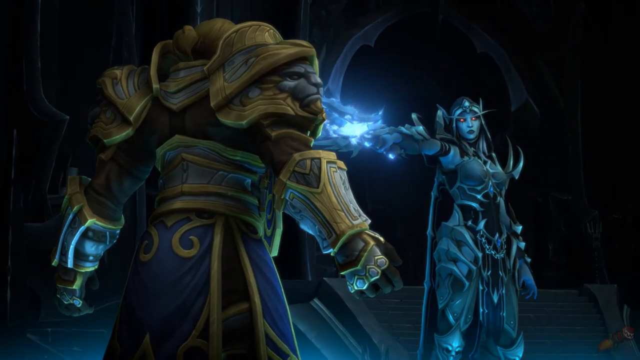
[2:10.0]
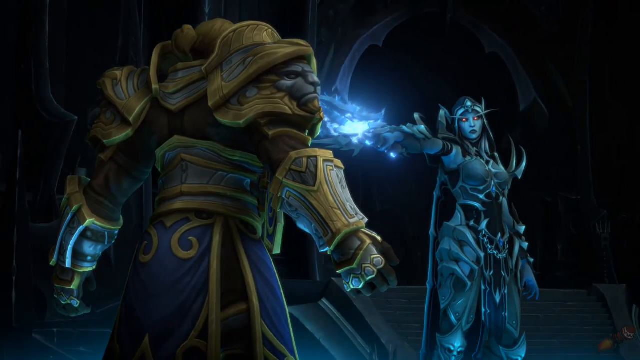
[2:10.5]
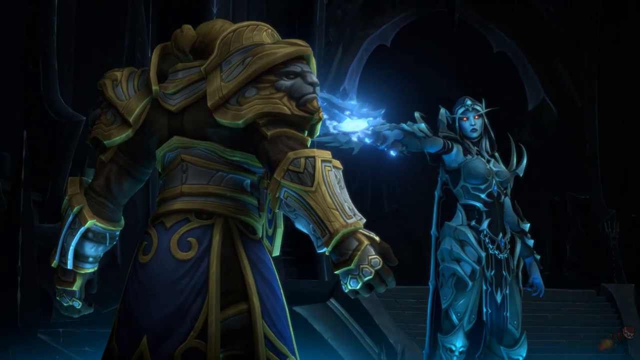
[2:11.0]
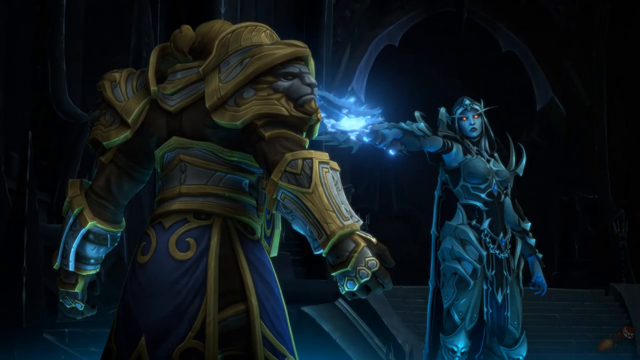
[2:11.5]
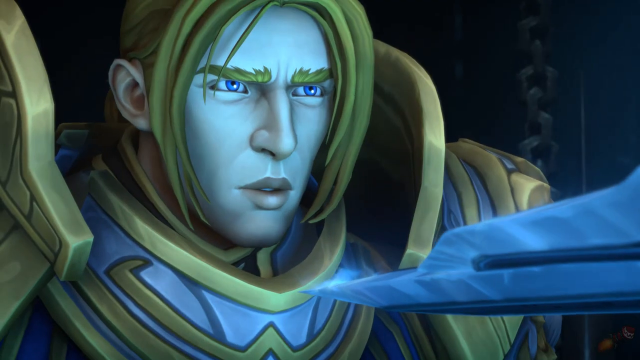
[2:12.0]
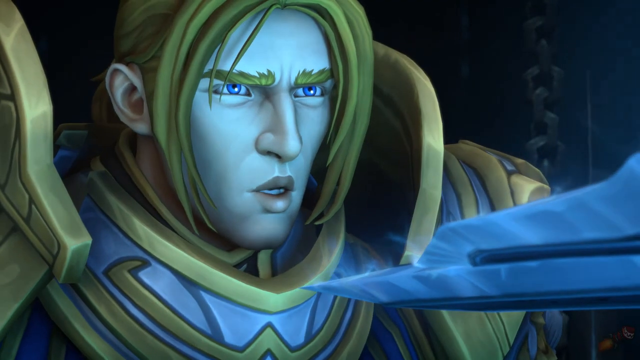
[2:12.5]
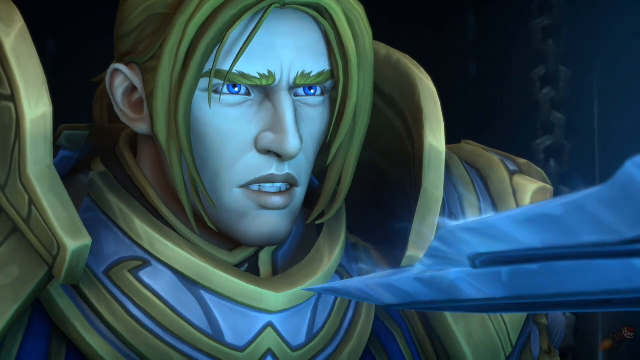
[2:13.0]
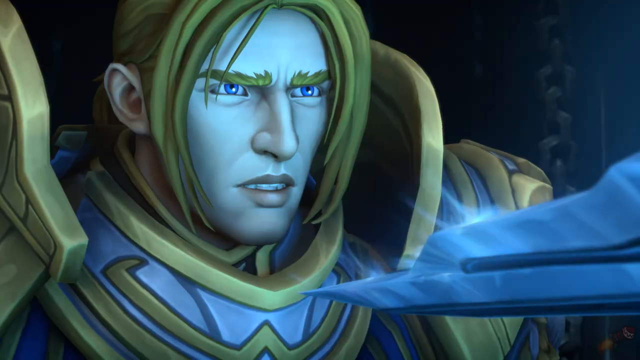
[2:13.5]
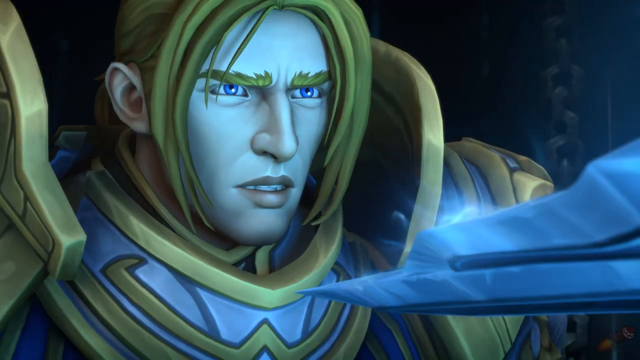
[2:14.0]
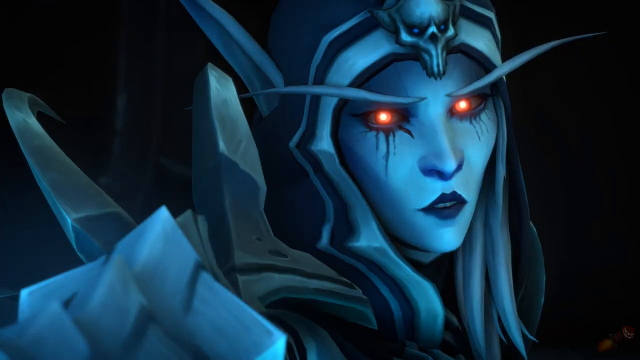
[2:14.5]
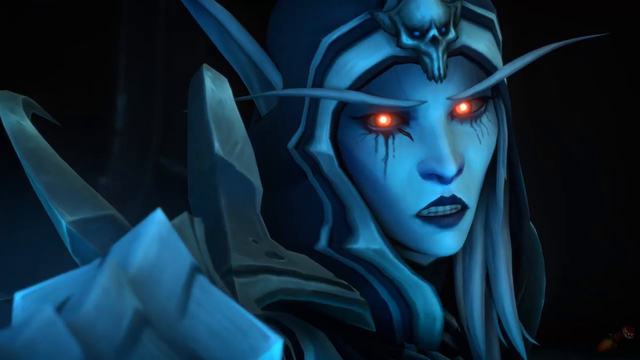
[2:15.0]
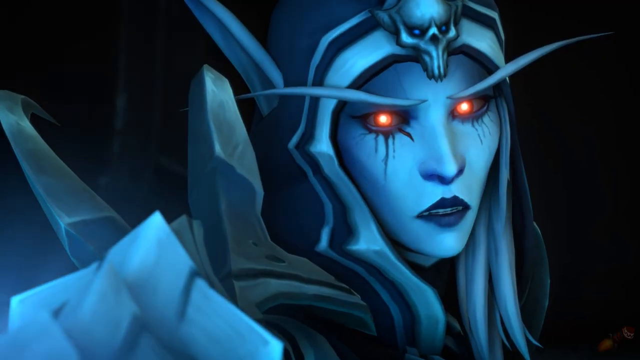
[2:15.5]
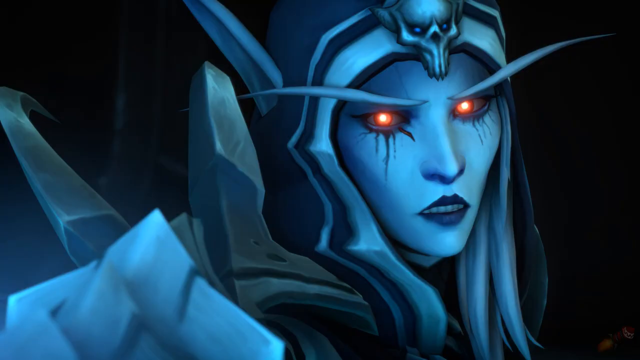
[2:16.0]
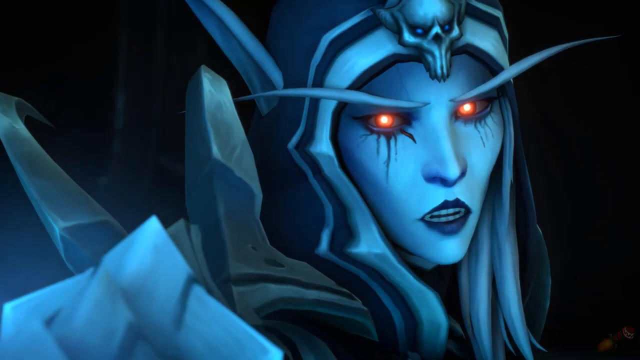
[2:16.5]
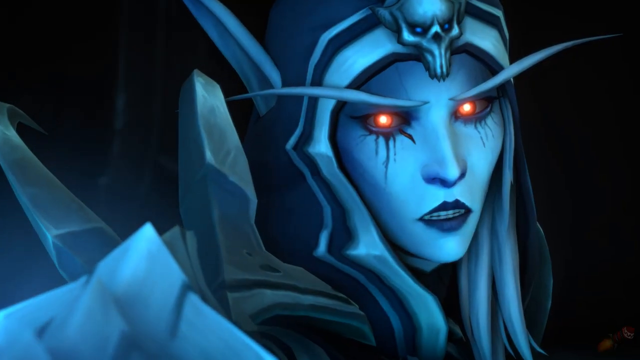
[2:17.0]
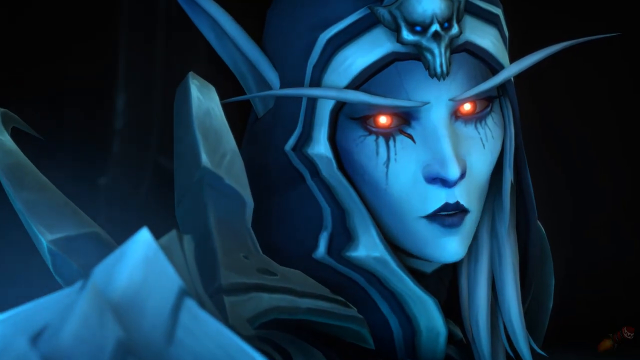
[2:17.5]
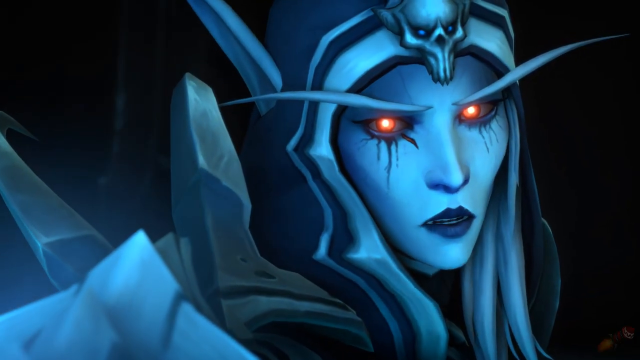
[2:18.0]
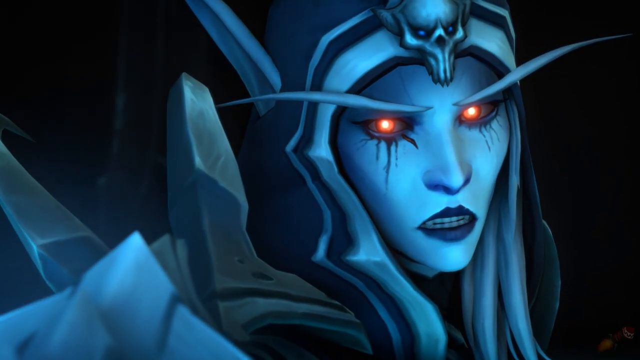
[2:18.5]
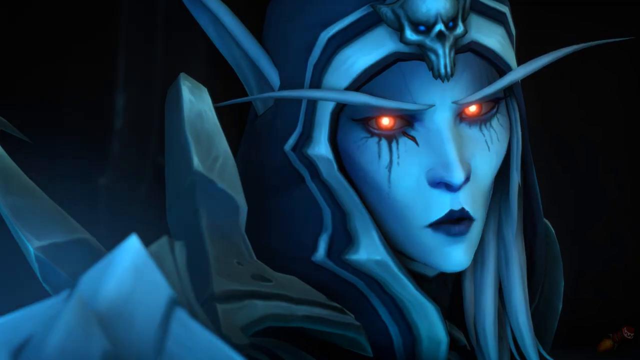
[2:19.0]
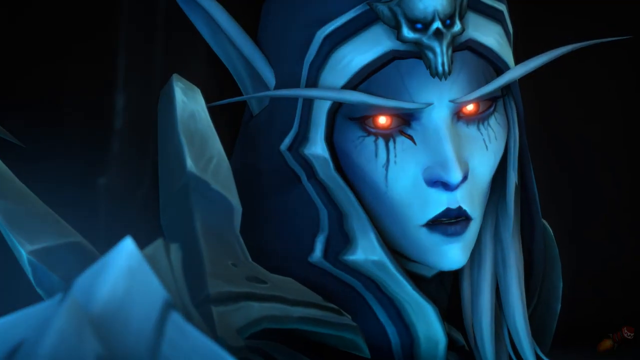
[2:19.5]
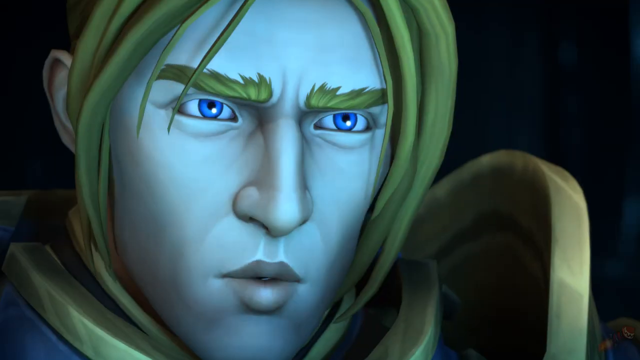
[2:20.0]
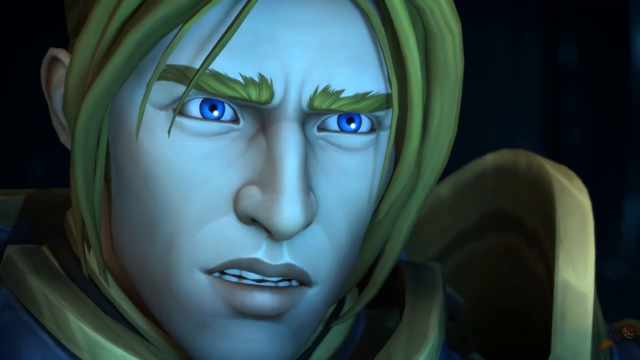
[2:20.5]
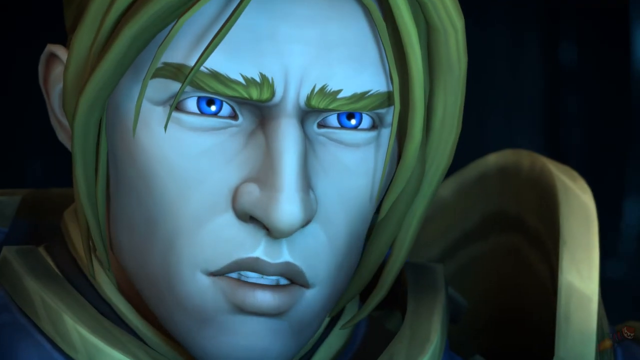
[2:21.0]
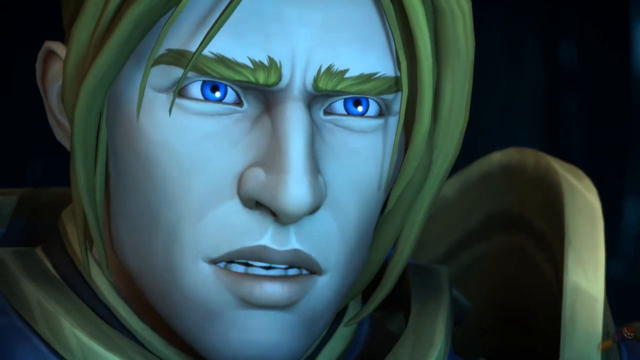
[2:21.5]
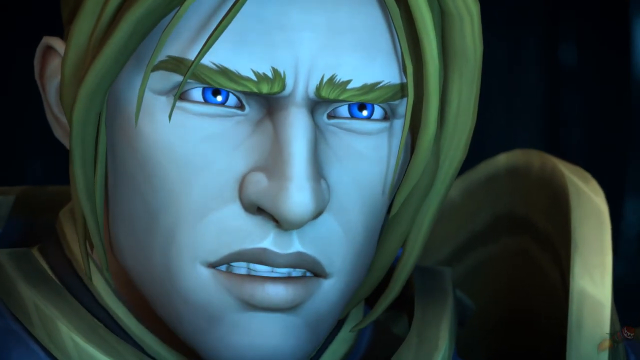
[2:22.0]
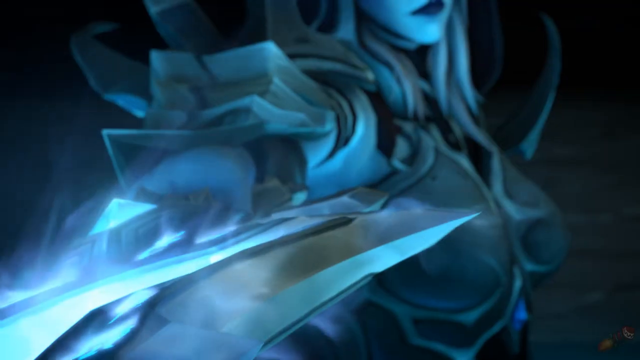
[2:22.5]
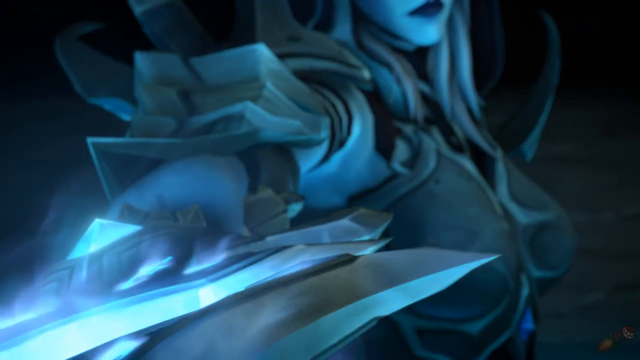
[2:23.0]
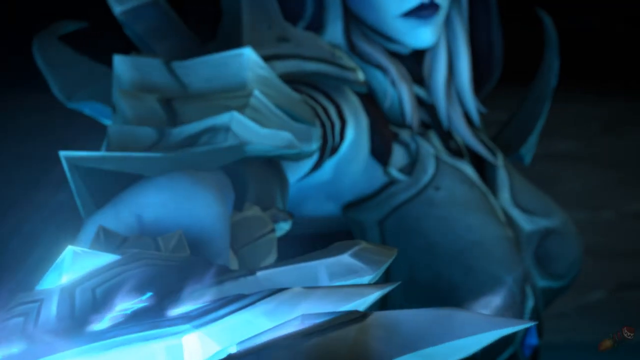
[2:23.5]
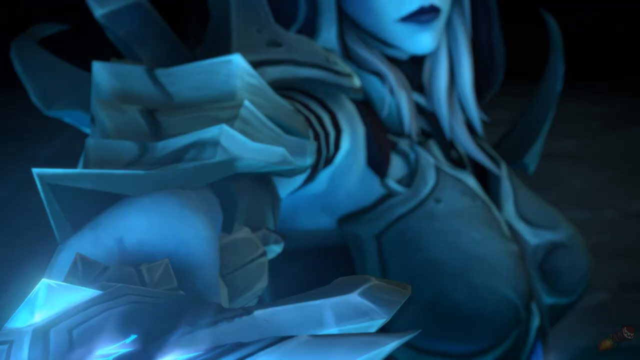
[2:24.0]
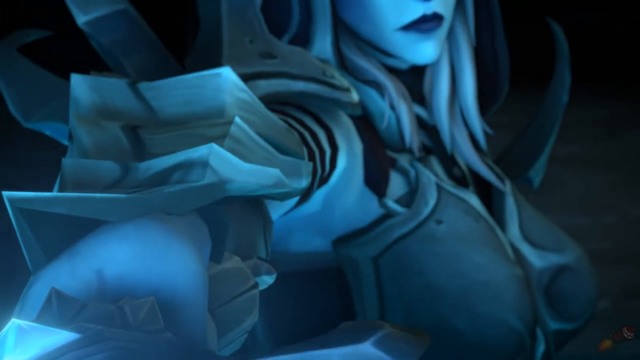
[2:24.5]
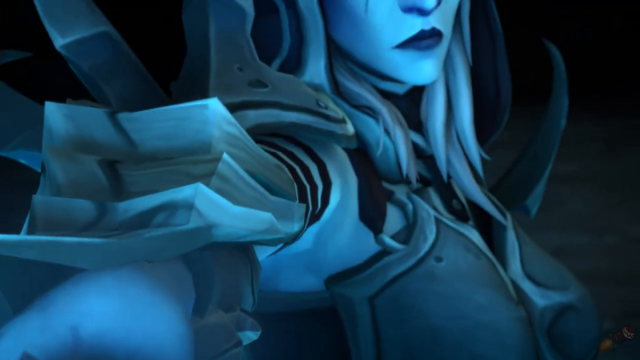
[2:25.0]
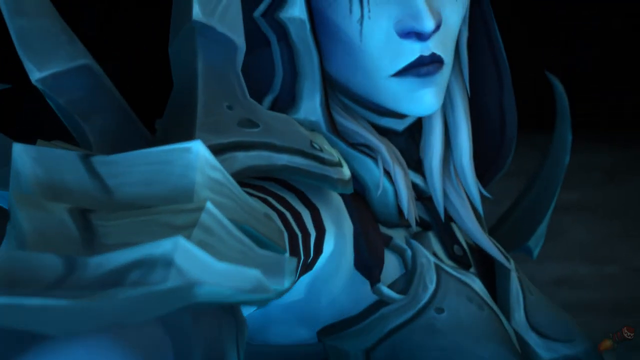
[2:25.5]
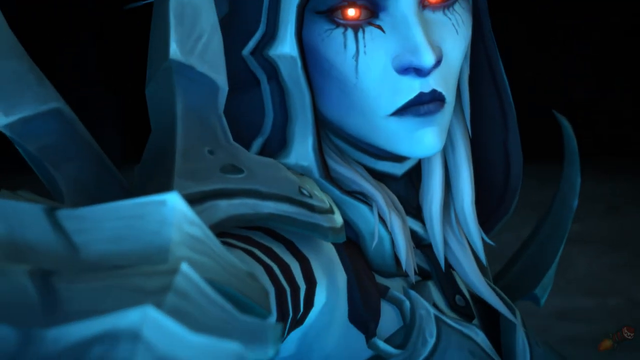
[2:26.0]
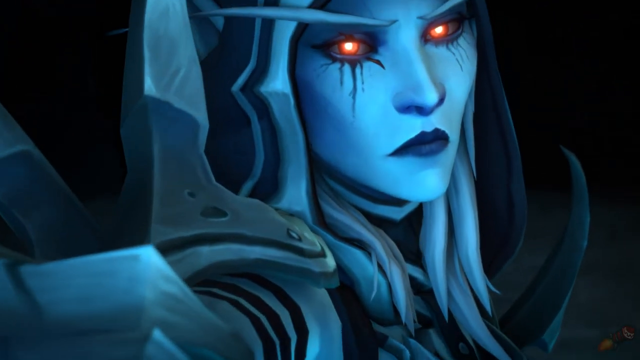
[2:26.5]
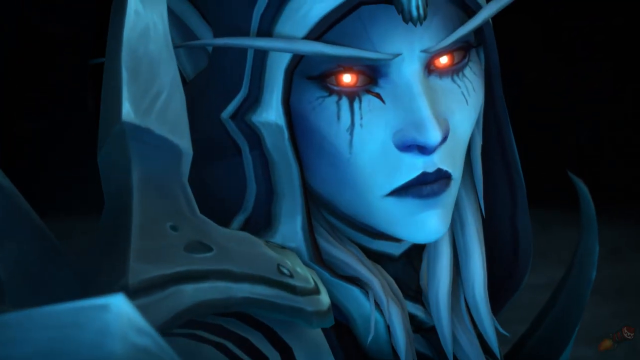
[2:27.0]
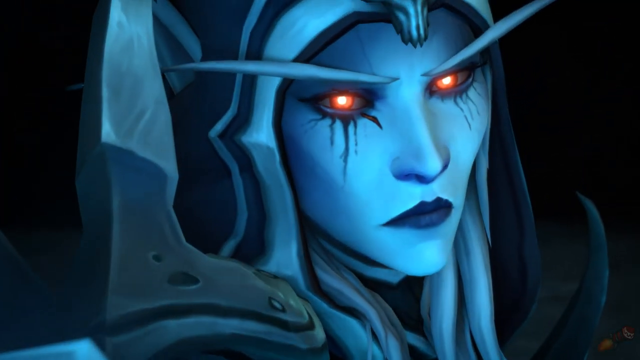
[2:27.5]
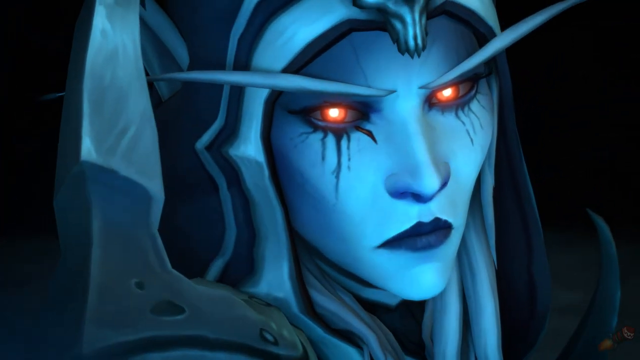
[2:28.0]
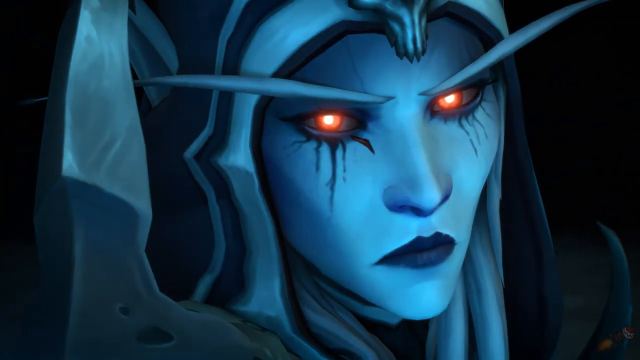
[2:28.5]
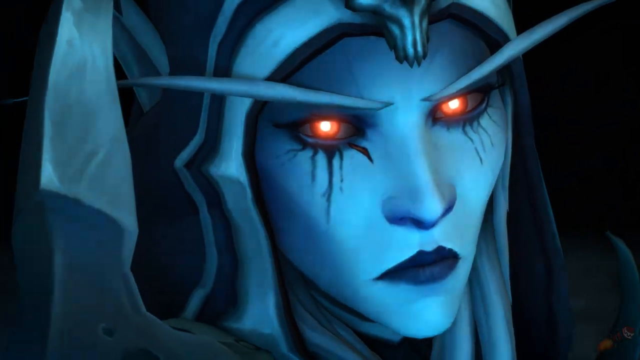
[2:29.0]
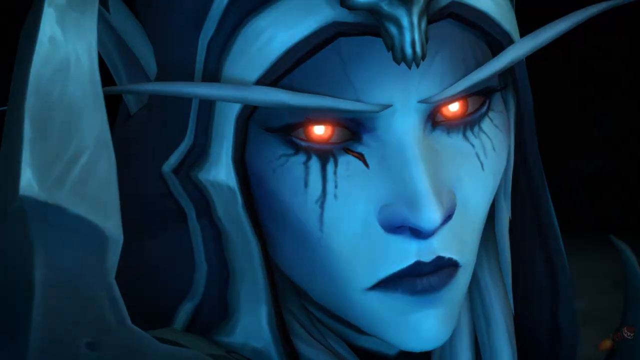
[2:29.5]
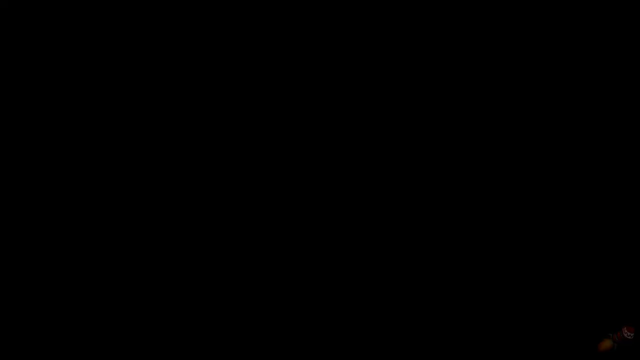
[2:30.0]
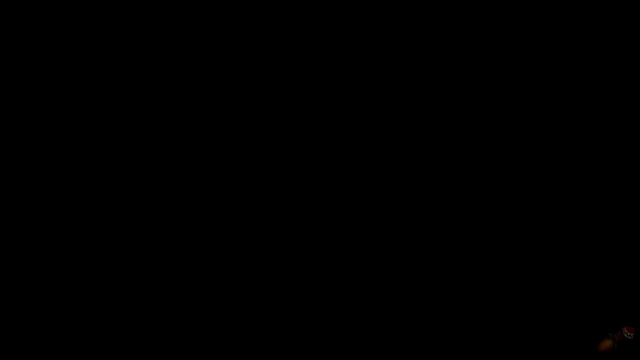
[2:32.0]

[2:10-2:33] Many video game characters fight against each other, trying to slash and burn one another. Many of the characters do not look realistic; they have lighting in their eyes and carry swords and shields, which they use in hand-to-hand combat.